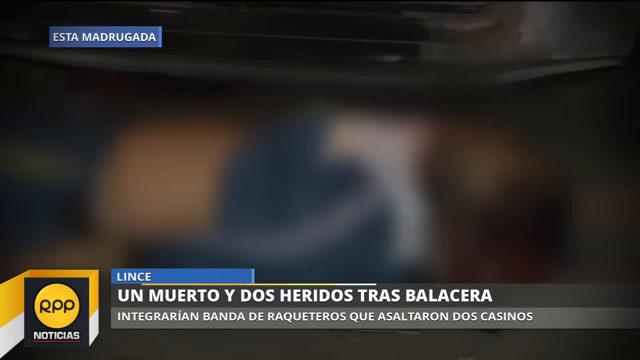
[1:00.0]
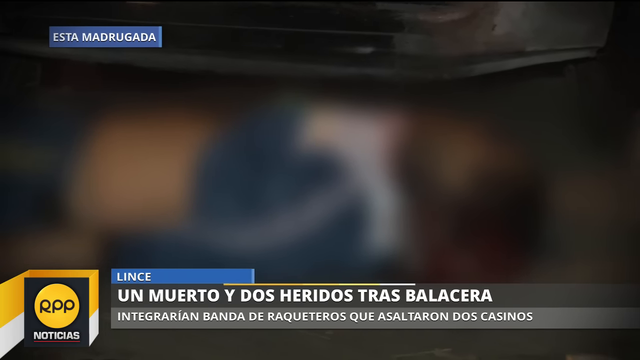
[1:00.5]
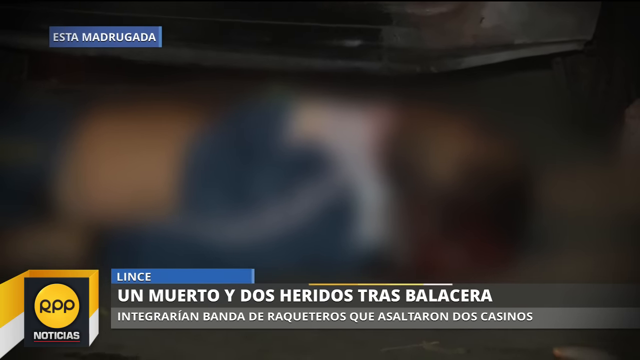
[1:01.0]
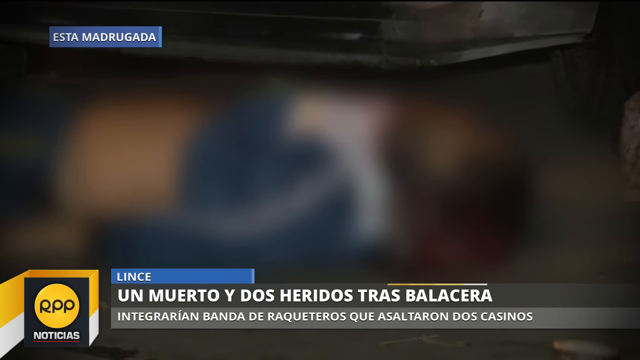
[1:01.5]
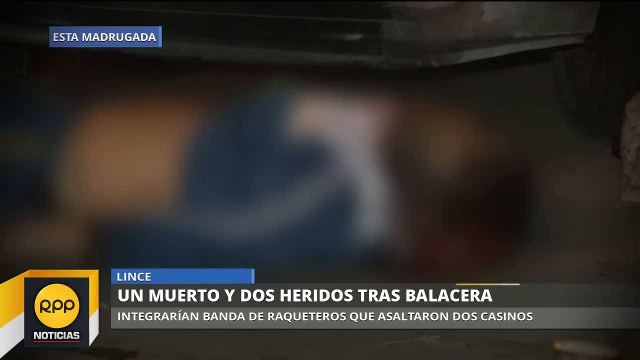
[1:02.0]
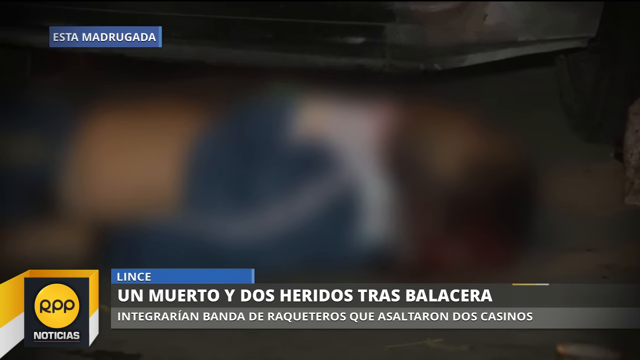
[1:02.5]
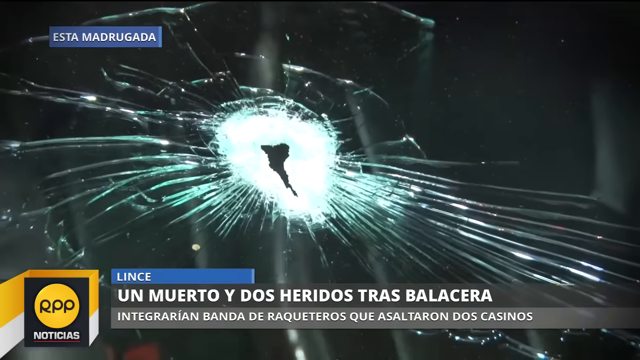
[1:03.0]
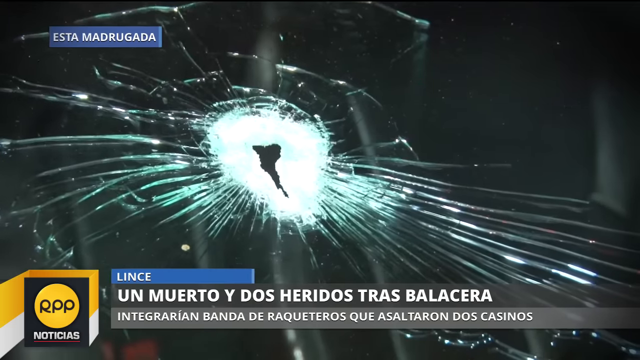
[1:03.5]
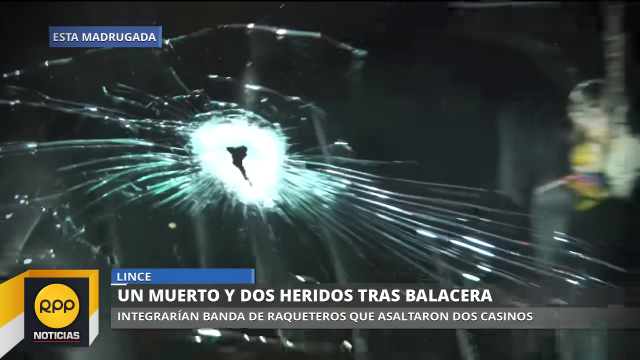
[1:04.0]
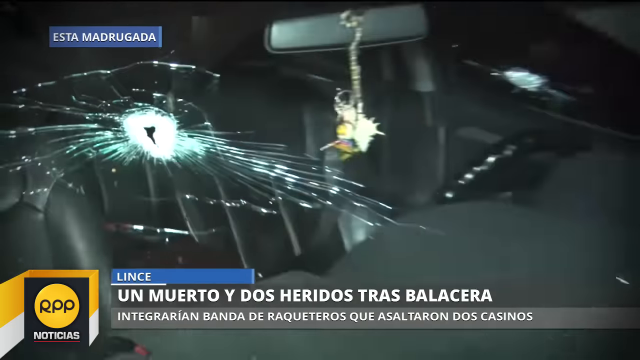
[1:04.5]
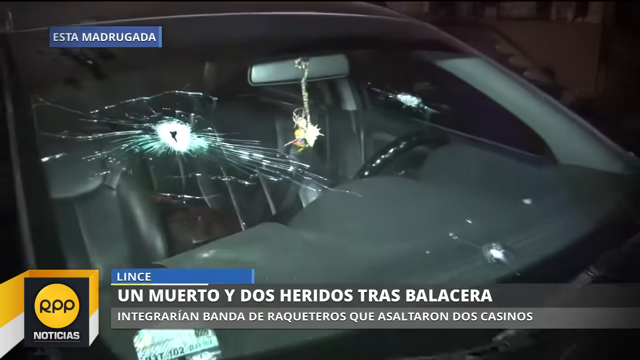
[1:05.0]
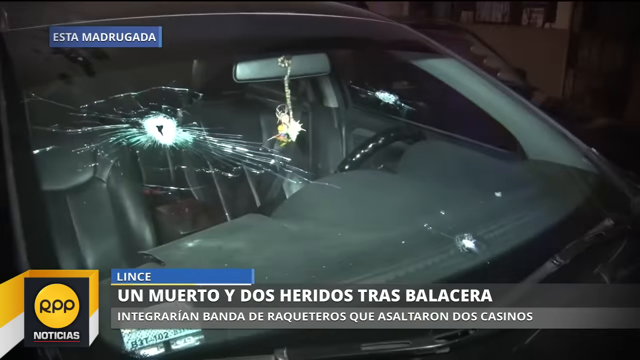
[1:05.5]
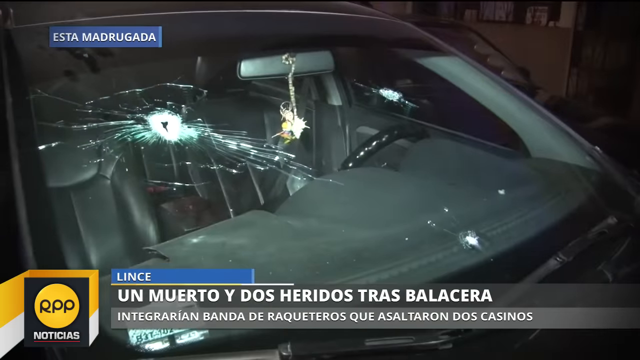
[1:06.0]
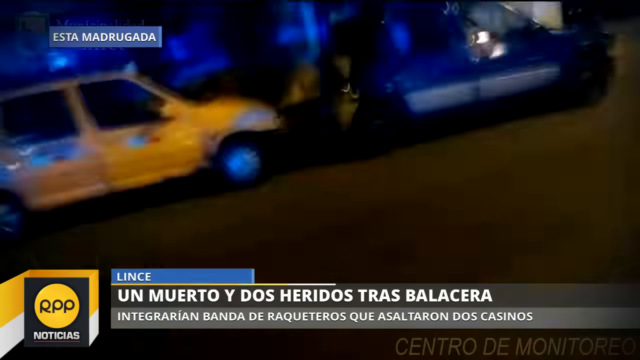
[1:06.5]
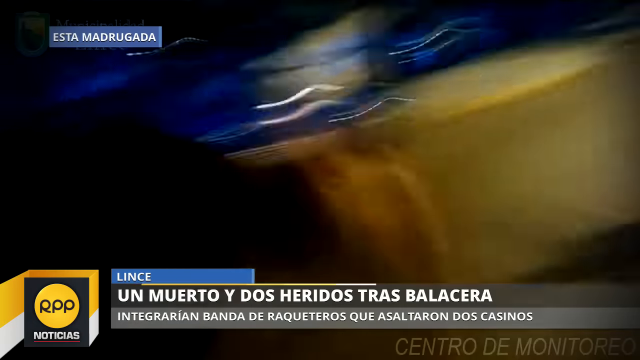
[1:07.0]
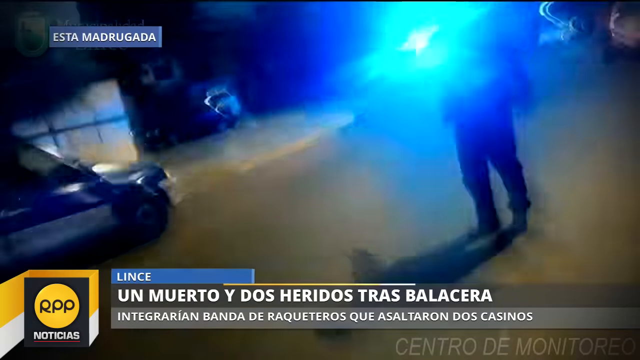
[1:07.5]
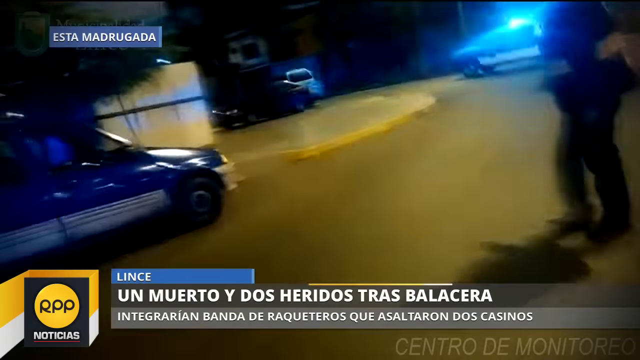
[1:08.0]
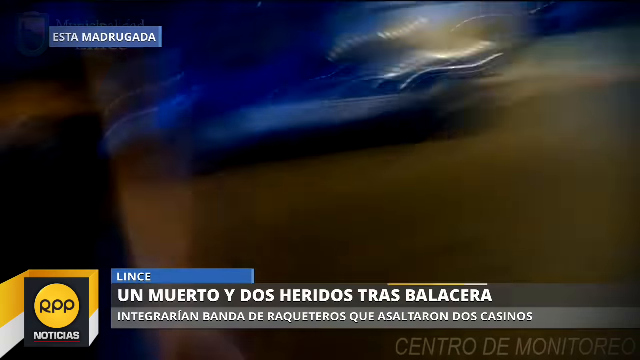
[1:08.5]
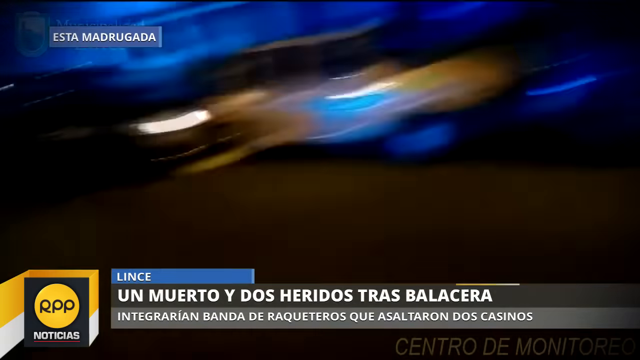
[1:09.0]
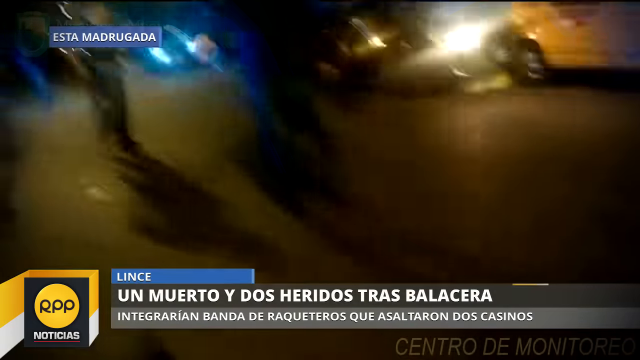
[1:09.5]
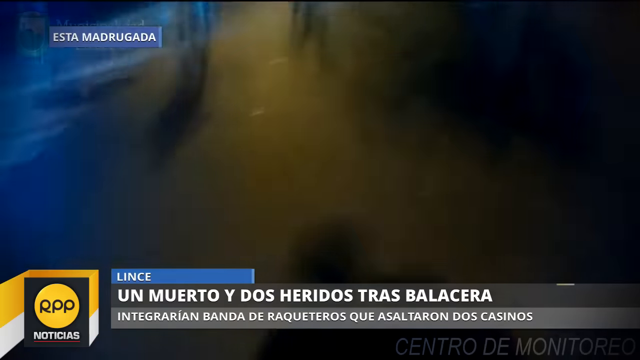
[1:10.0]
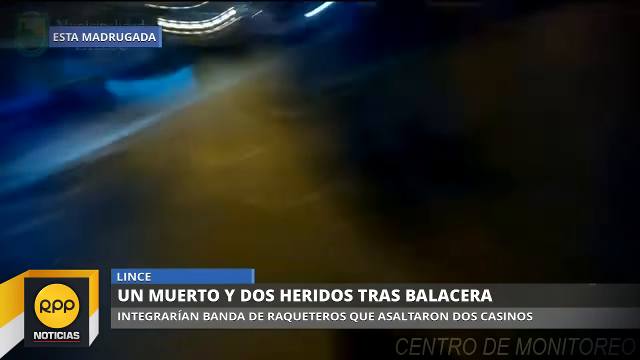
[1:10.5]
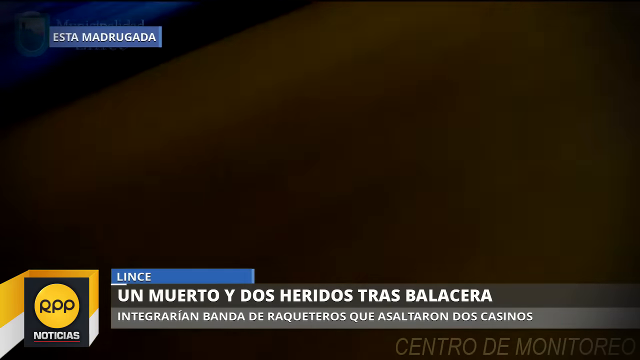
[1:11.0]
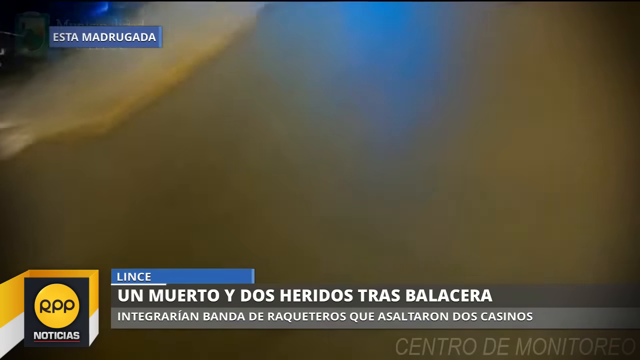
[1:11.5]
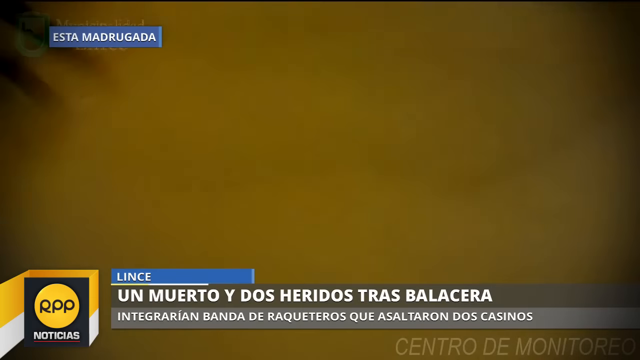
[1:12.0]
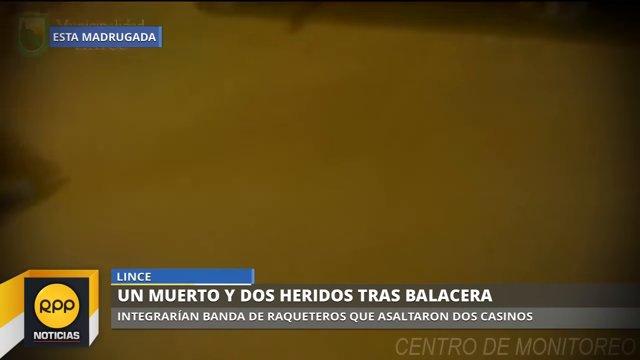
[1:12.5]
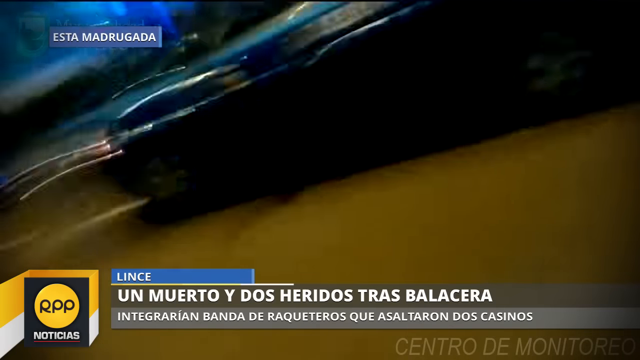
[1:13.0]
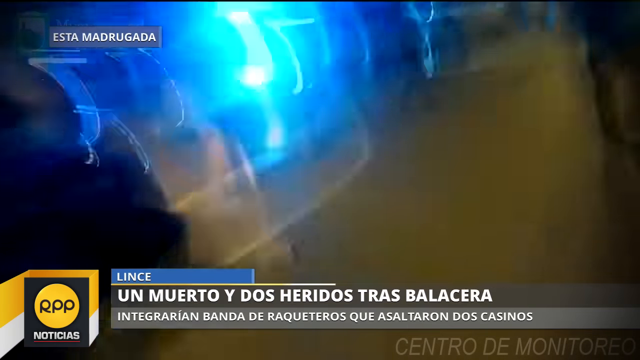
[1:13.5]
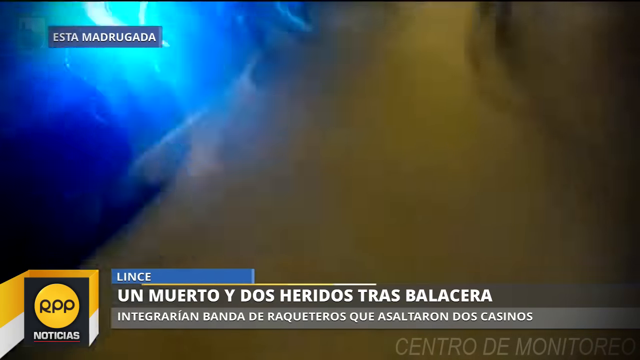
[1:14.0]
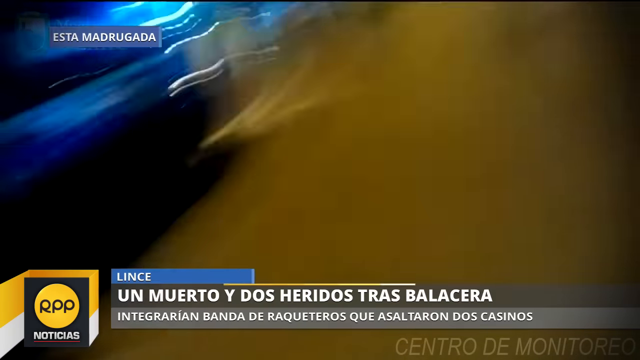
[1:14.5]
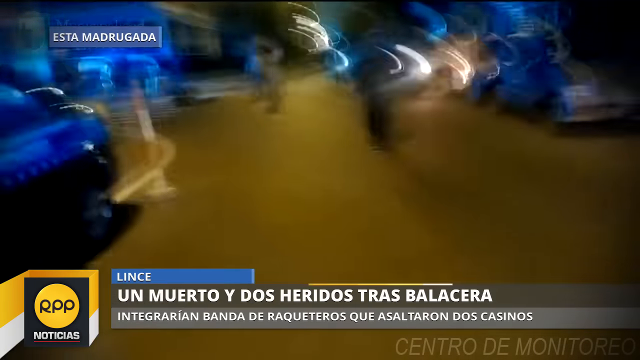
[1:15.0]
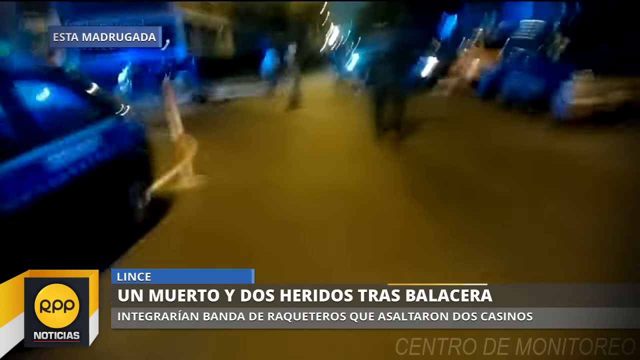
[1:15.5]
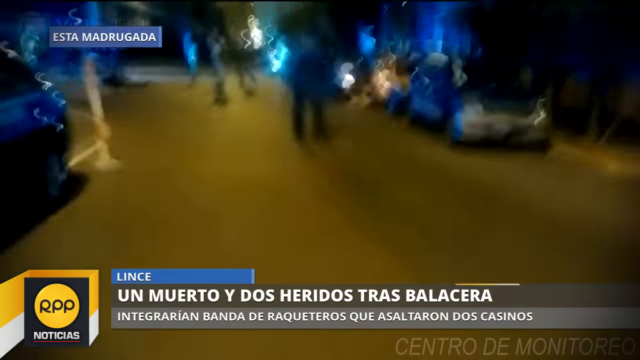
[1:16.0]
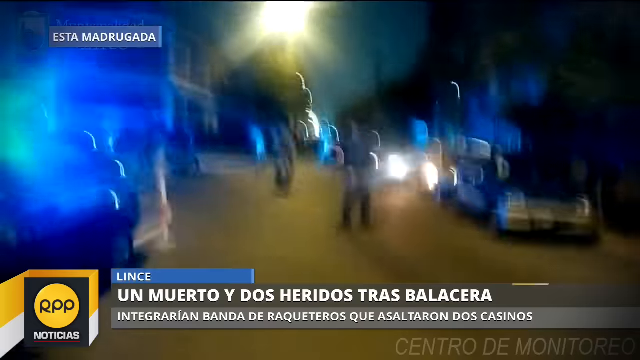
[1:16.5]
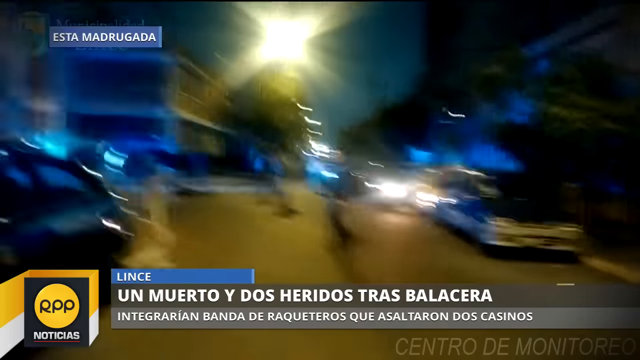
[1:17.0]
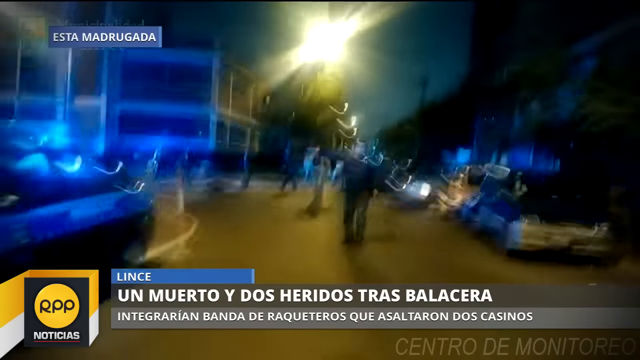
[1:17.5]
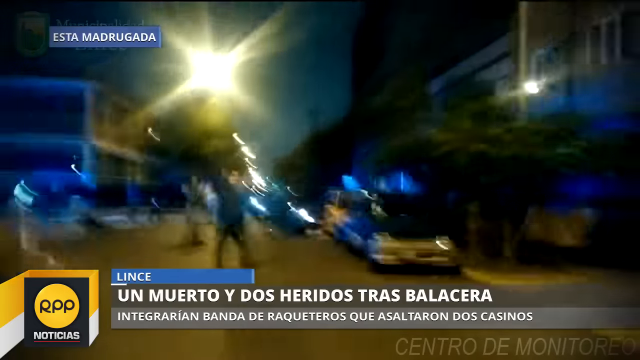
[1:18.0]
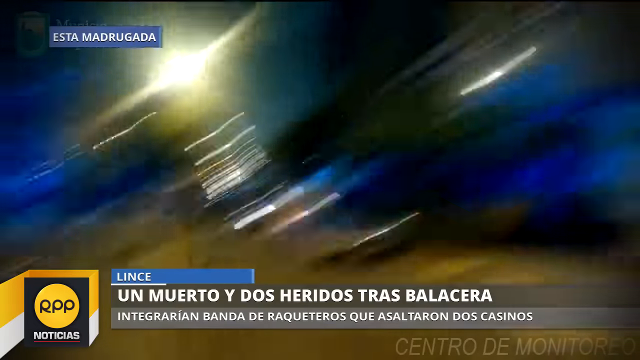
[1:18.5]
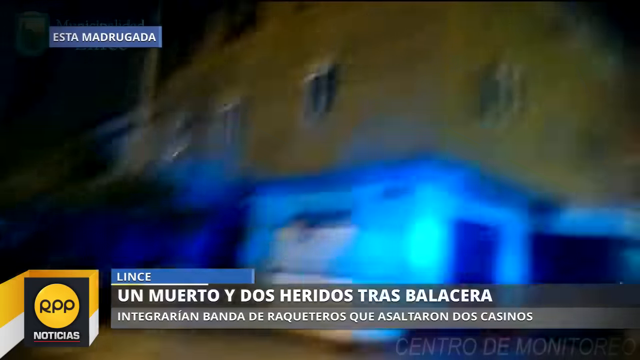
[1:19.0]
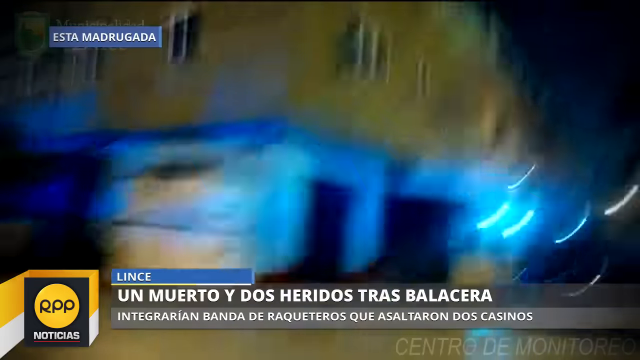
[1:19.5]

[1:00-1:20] A panning shot shows an individual lying on the ground, apparently shot, wearing a green tracksuit and lying beneath the bumper of a black vehicle. White lettering at the bottom of the screen gives information about the video, and on the left a yellow banner with black lettering reads "RPP", with "Notitious" in white lettering beneath it, which appears to be the news organization. The camera pans over the shot individual, whose image is blurred out. A shot of a window pane shows a bullet hole in its center with the glass broken around it and cracks running to the left and right. The view zooms out to a wider shot of the windshield at the front of the car. The video then switches to body cam footage of a police officer or reporter walking down the street, with an individual in front of them and cars and sirens on the left side of the street. They turn around to show a number of other police officers walking behind them and other people in the background with more sirens, then walk over to the left.